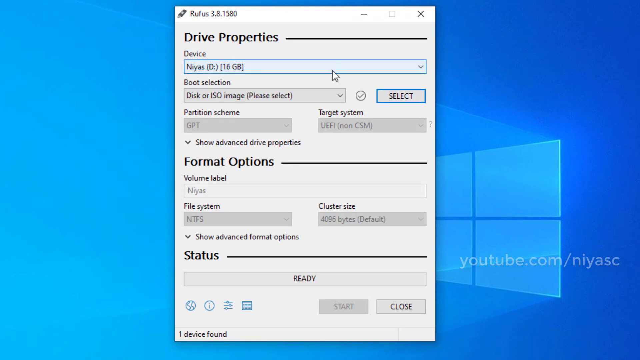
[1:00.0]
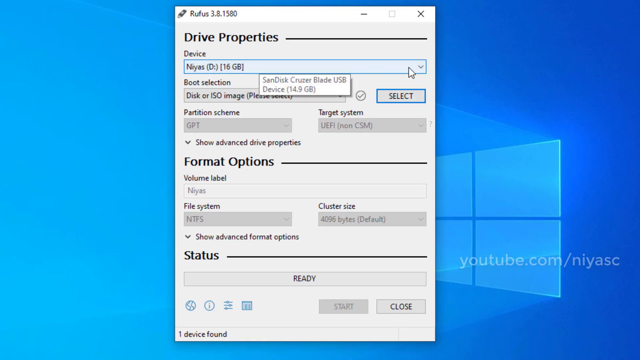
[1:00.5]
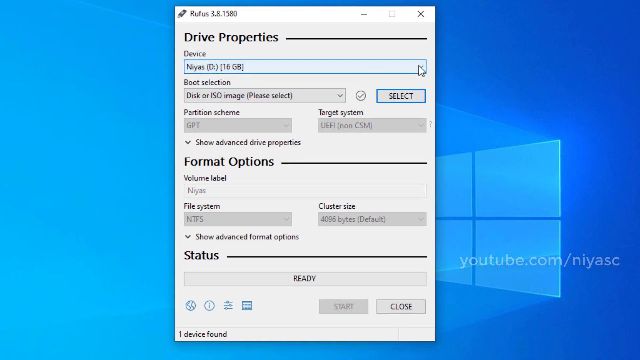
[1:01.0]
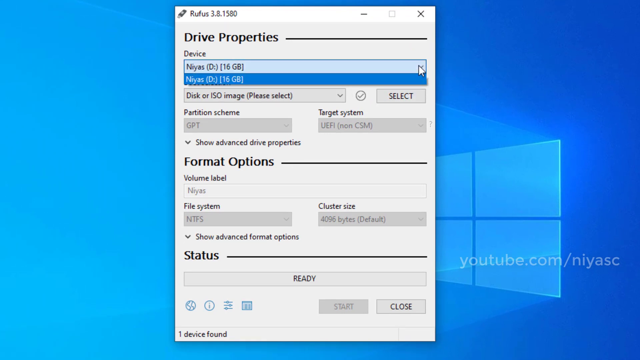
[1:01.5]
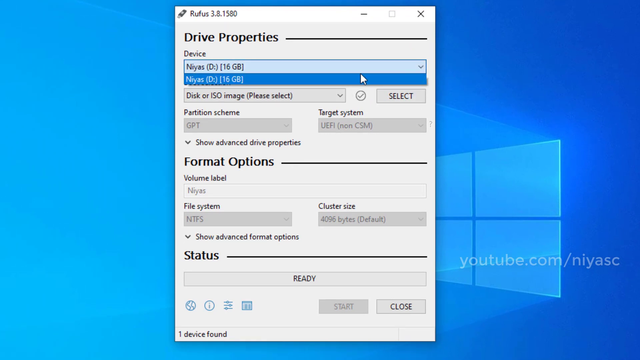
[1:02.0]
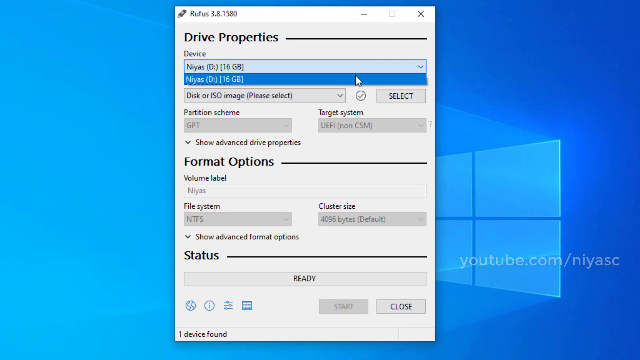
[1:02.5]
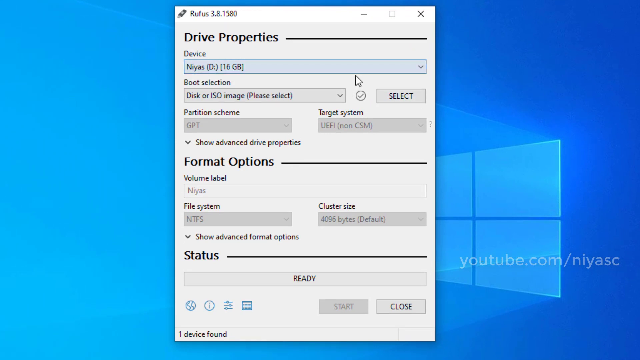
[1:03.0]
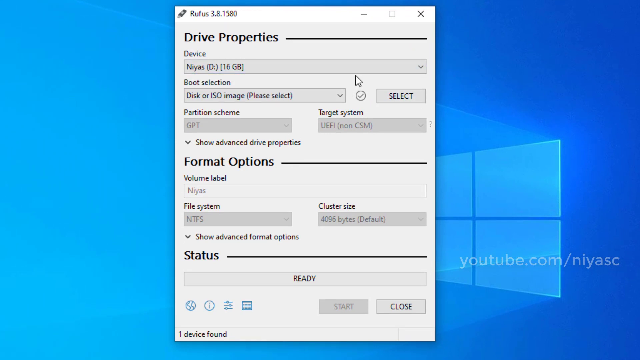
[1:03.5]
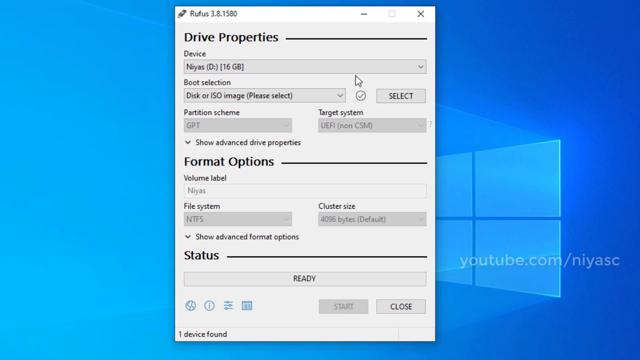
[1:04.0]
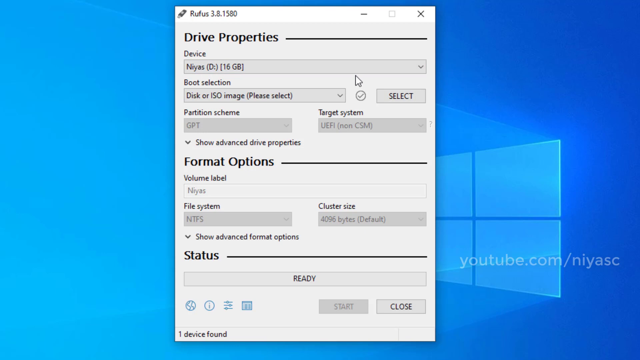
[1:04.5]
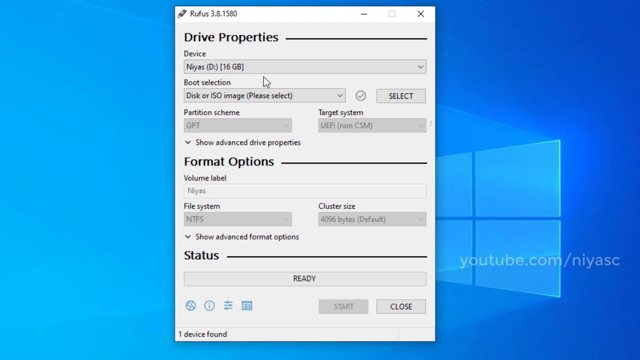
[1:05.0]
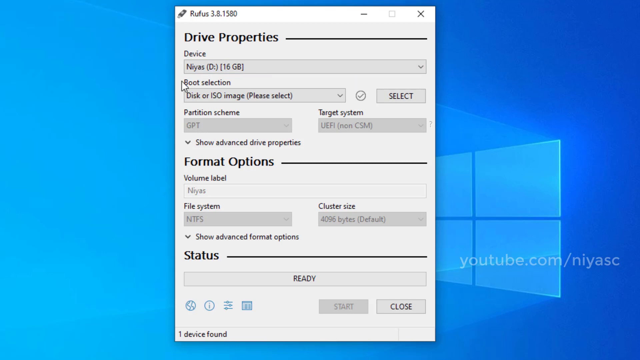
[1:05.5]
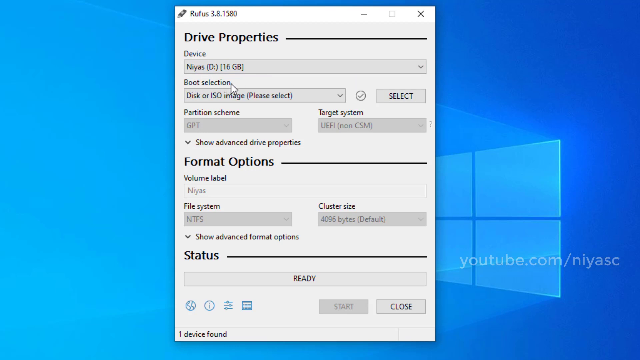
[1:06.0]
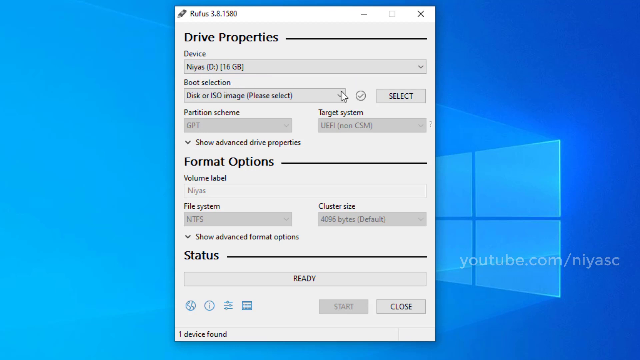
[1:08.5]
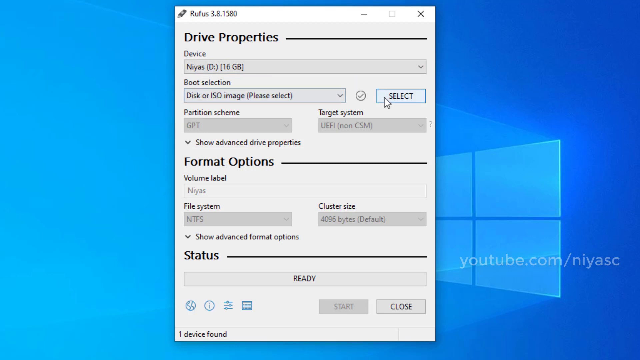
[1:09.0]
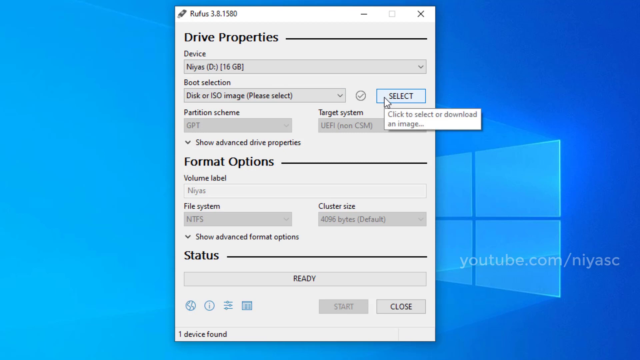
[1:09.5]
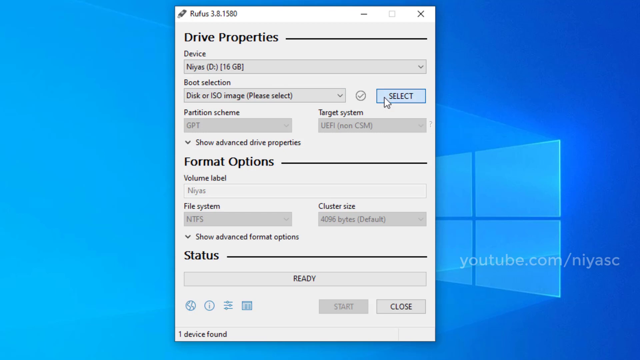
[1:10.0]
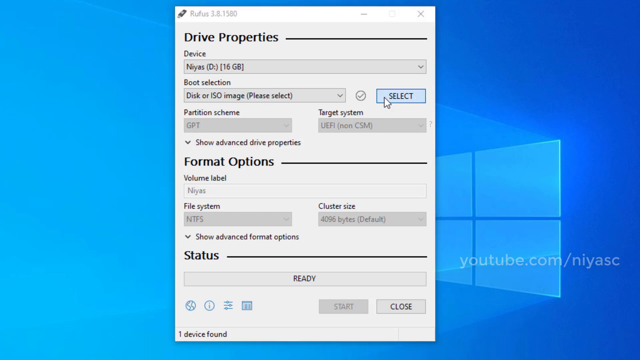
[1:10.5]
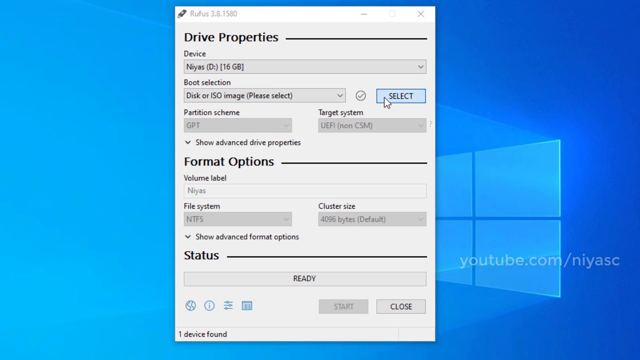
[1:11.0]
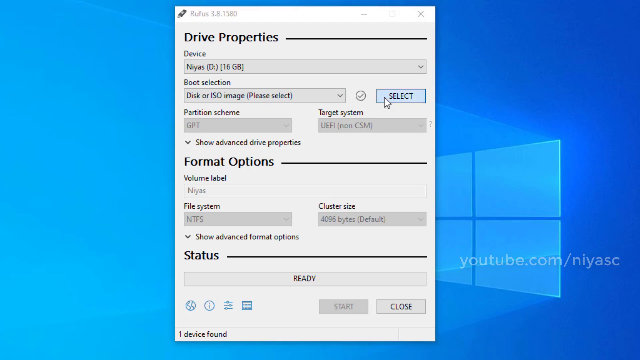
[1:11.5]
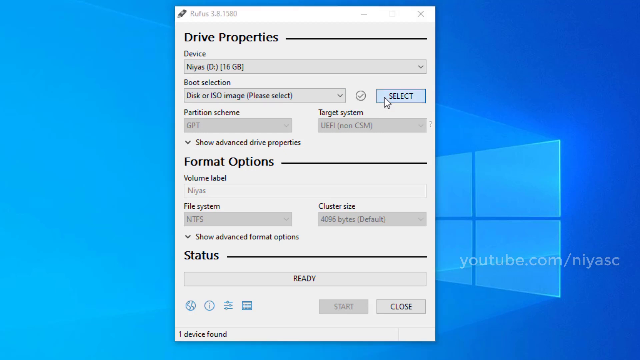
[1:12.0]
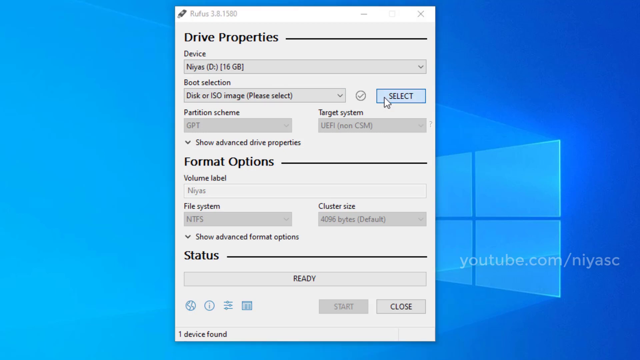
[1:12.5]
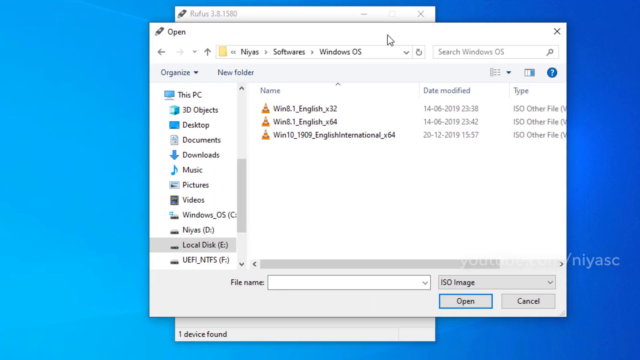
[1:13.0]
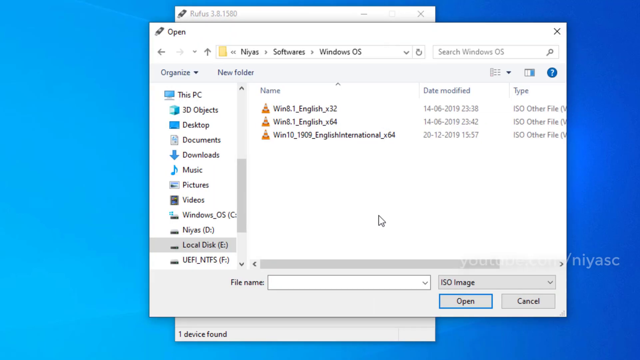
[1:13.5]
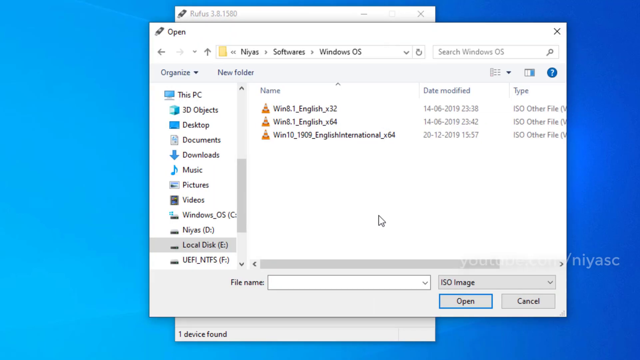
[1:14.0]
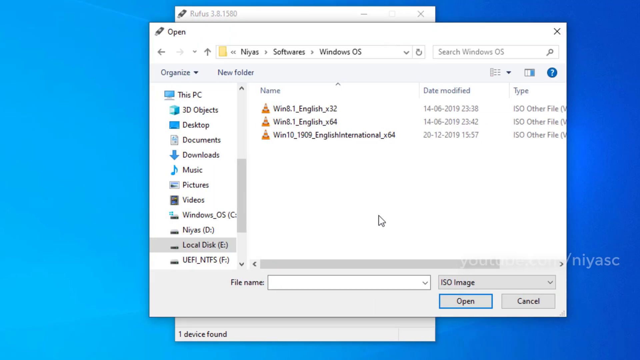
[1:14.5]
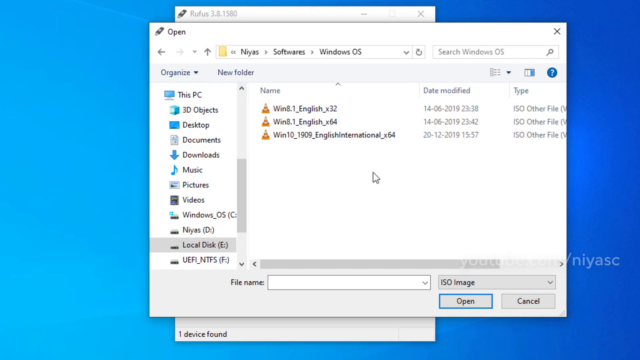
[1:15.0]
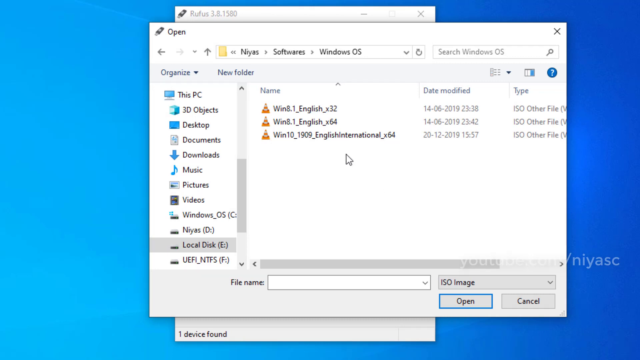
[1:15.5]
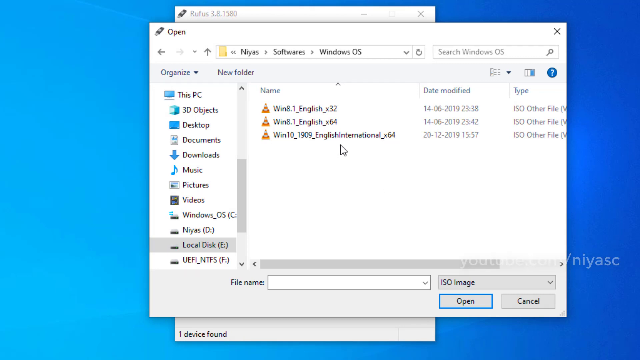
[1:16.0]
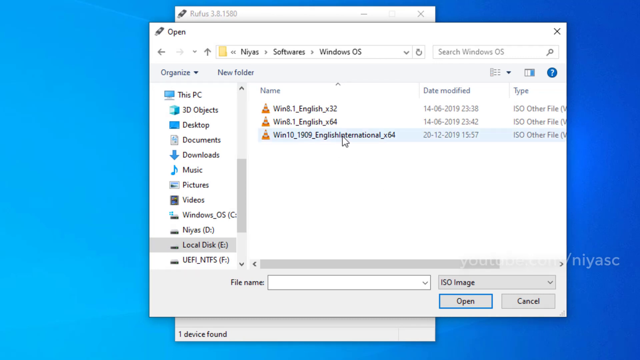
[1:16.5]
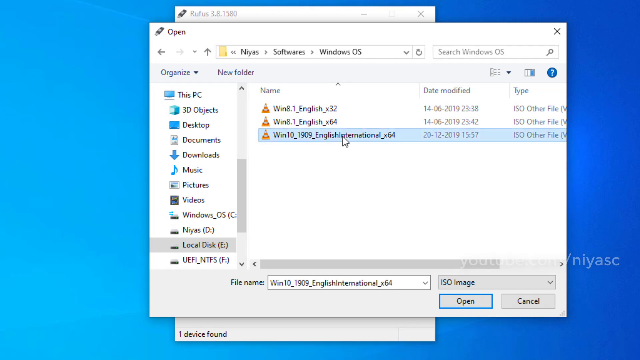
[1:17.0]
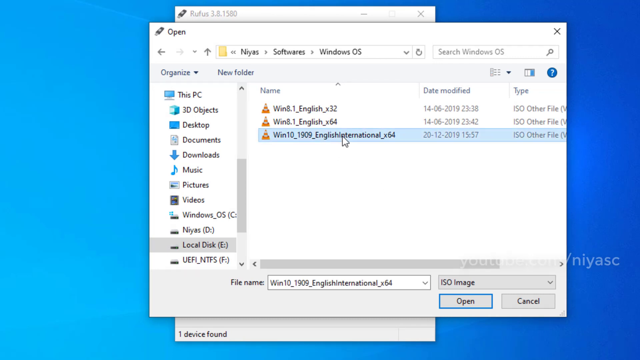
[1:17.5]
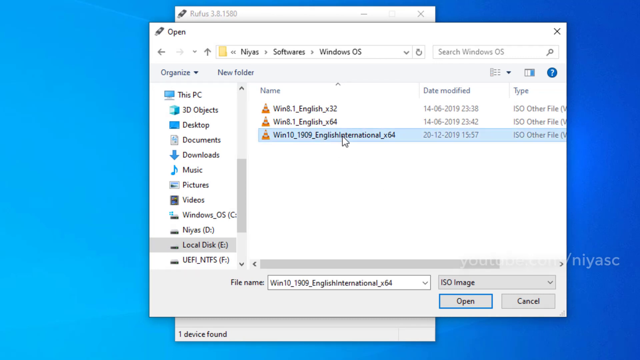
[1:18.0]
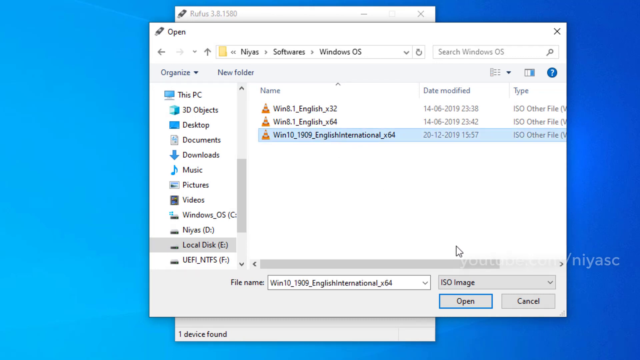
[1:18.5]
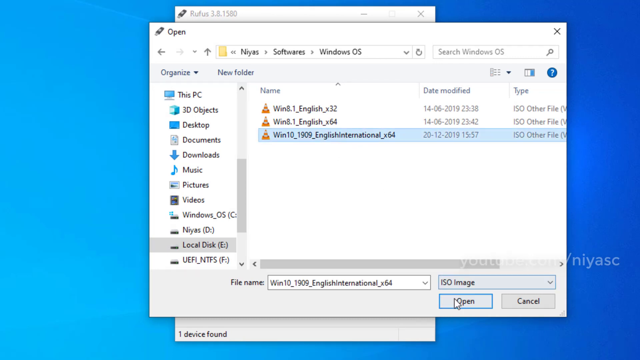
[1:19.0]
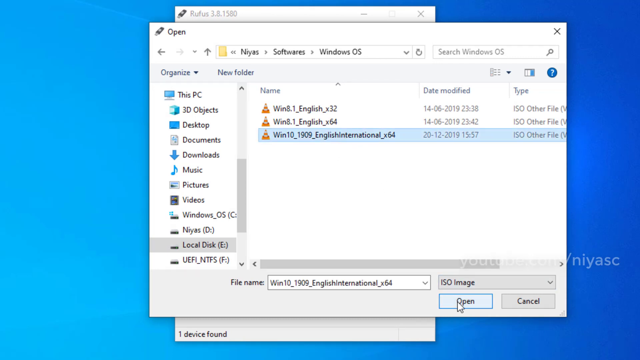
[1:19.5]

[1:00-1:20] The newly downloaded Rufus window remains on screen. Below Drive Properties there are four sections, including Partition Scheme and Target System. Device has a drop-down arrow on the right-hand side and currently shows a selected device; the user clicks the arrow, and the current device is the only option available. Boot Selection is next, and the user hovers the cursor over its name; it also has a drop-down arrow to the right of the name. To the right is a button reading "Select", and apparently when the user clicks it, files from the computer pop up on the screen. Three files are shown, and the user apparently selects the bottom one and clicks the "Open" button at the bottom.